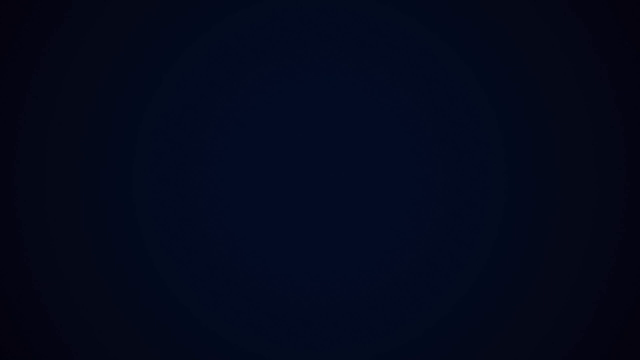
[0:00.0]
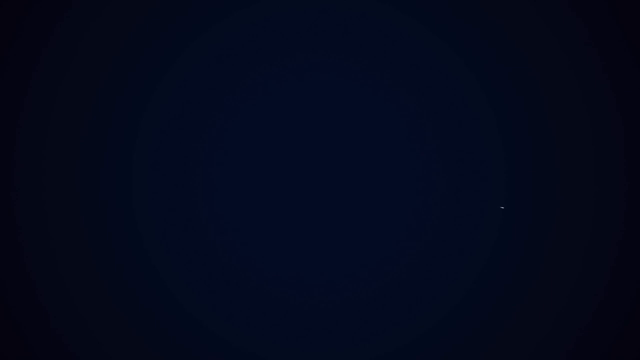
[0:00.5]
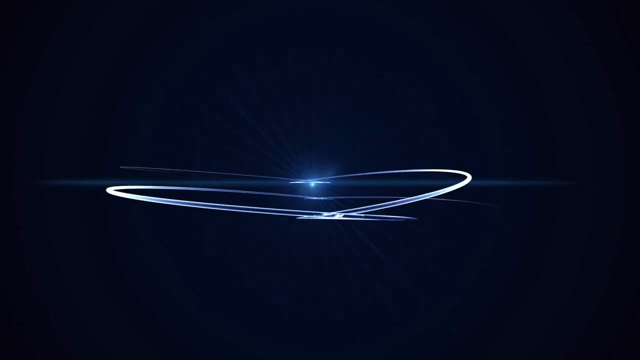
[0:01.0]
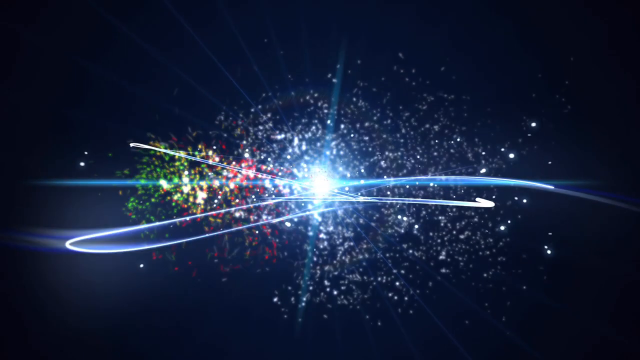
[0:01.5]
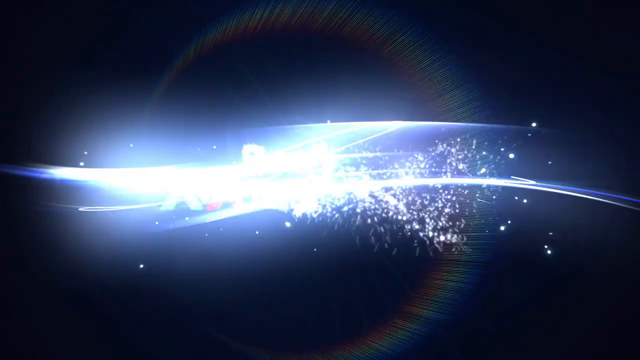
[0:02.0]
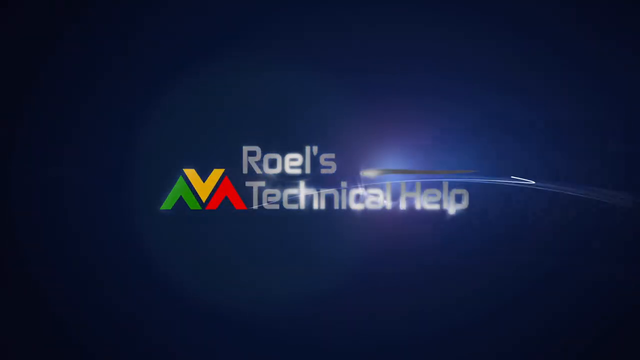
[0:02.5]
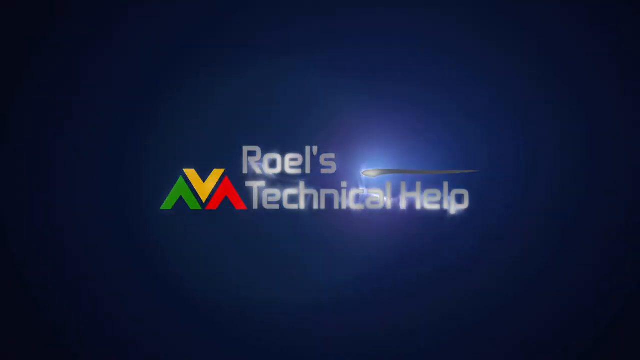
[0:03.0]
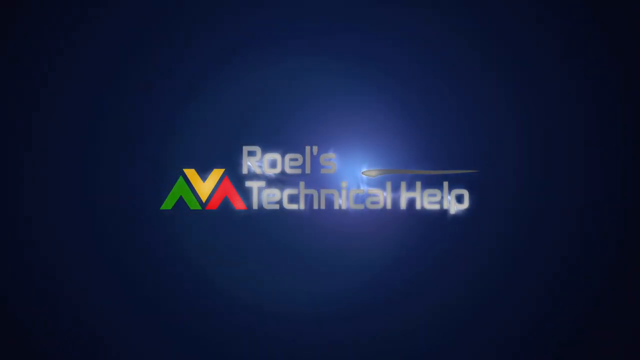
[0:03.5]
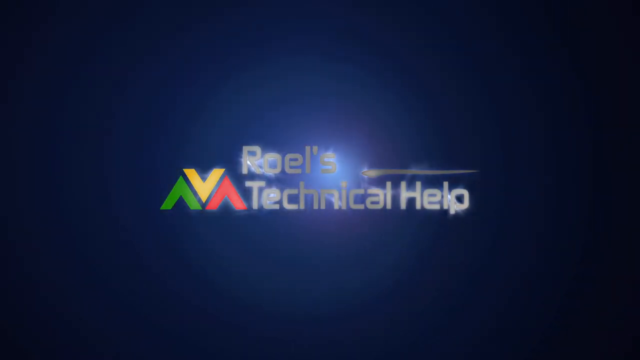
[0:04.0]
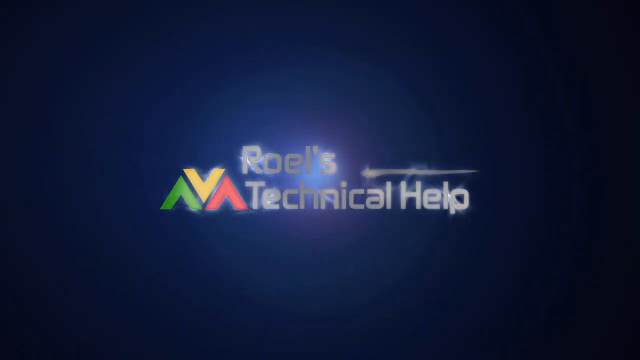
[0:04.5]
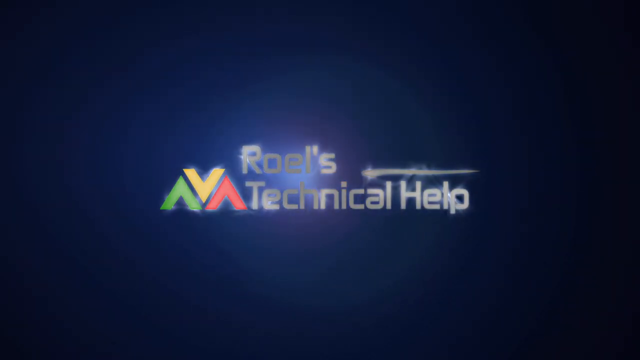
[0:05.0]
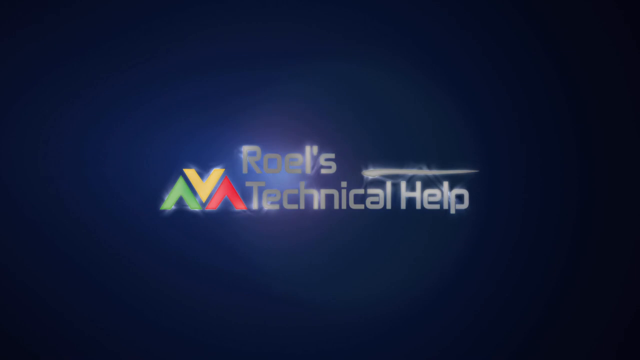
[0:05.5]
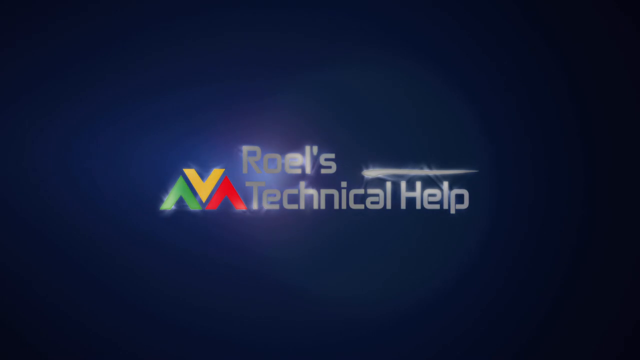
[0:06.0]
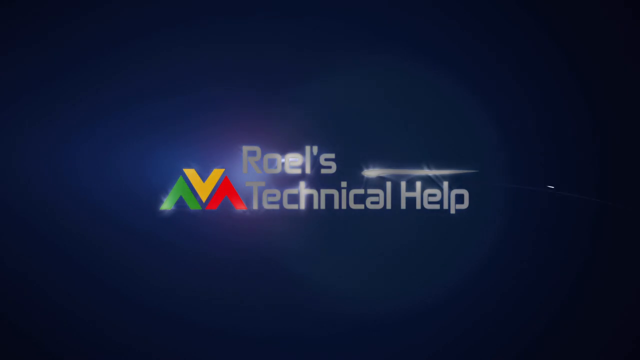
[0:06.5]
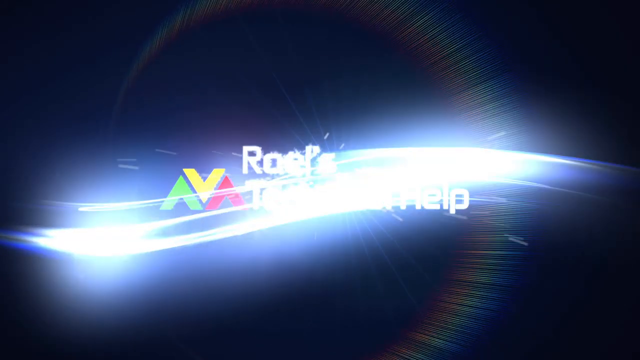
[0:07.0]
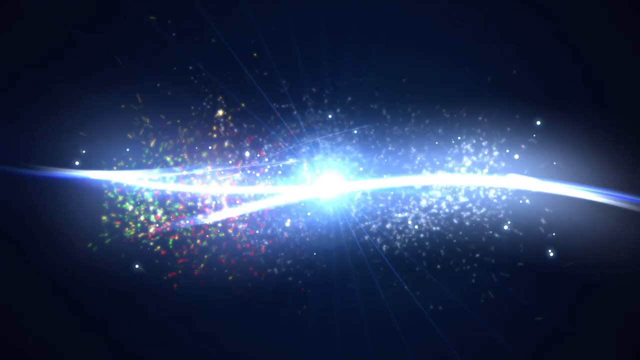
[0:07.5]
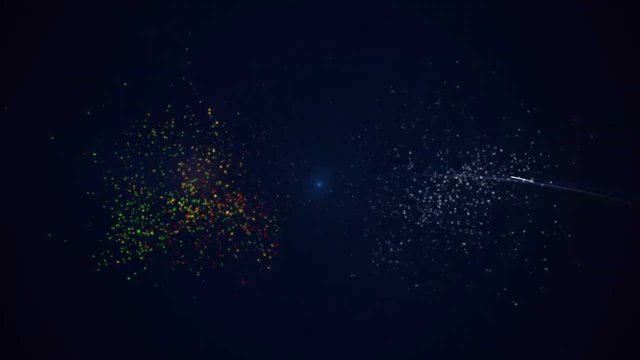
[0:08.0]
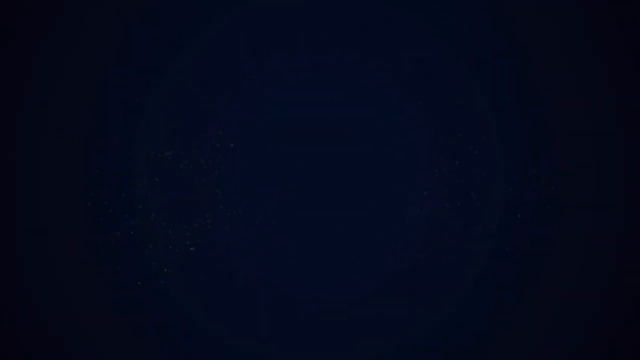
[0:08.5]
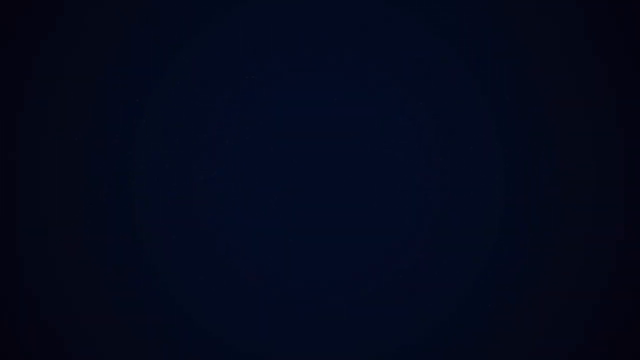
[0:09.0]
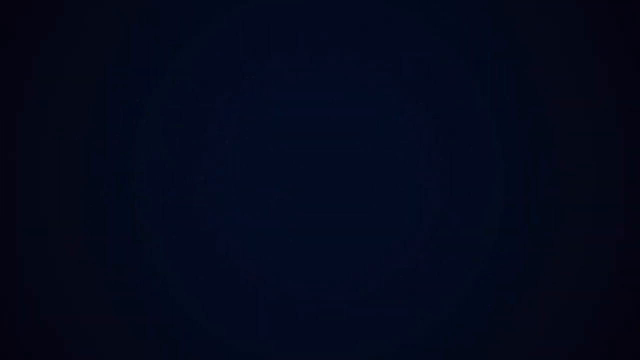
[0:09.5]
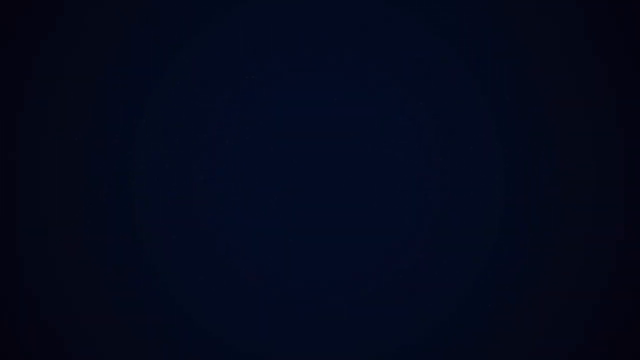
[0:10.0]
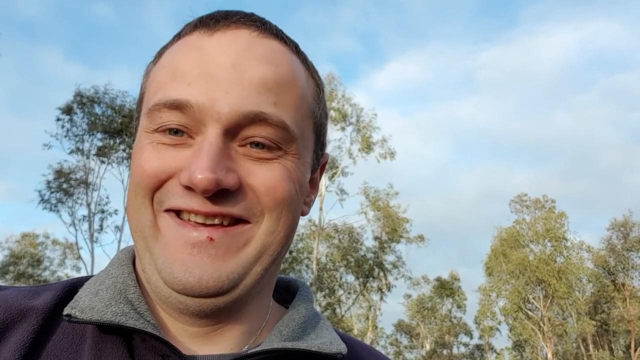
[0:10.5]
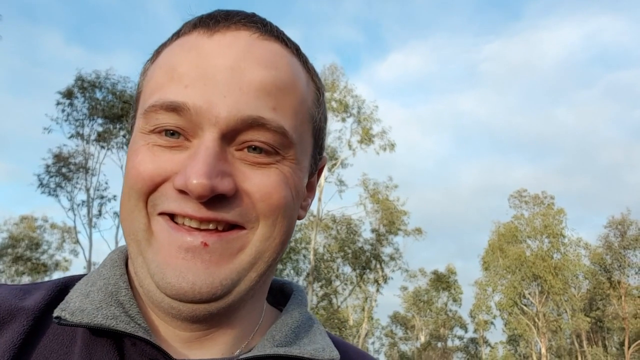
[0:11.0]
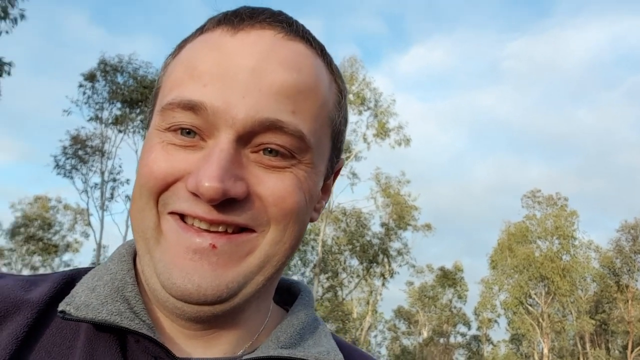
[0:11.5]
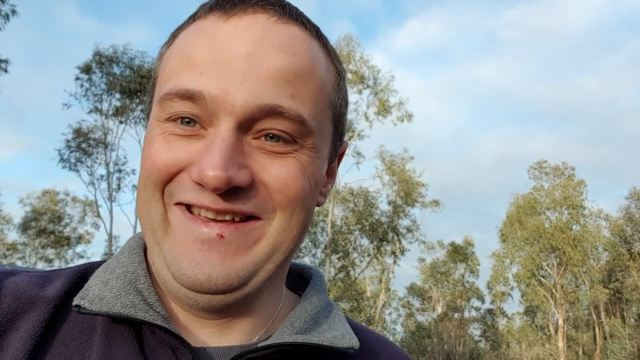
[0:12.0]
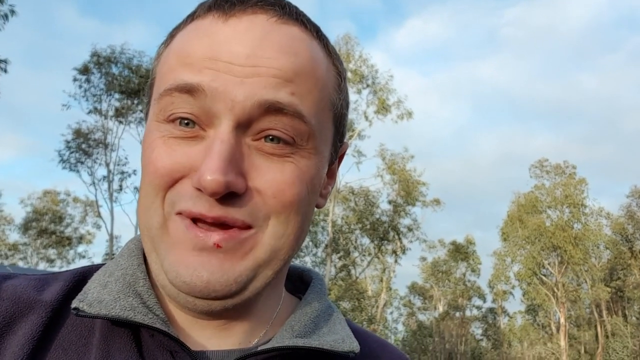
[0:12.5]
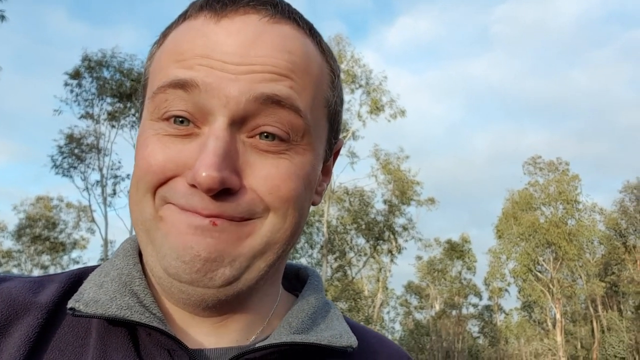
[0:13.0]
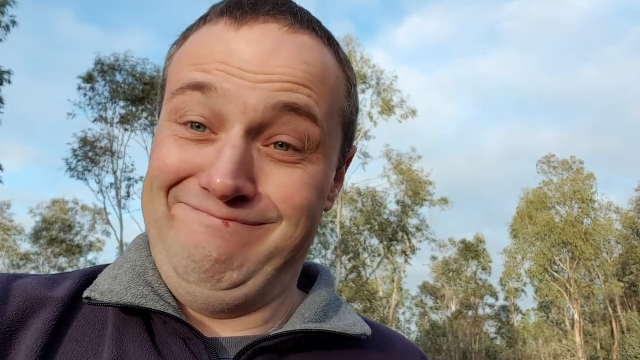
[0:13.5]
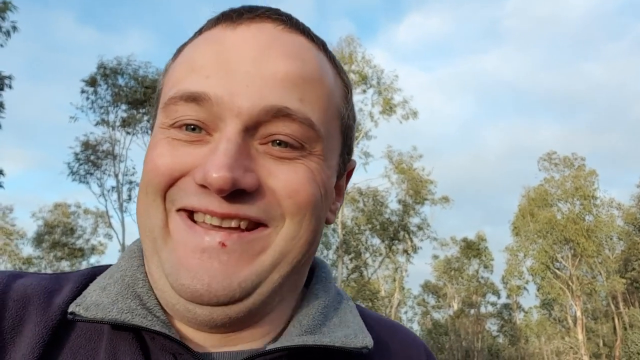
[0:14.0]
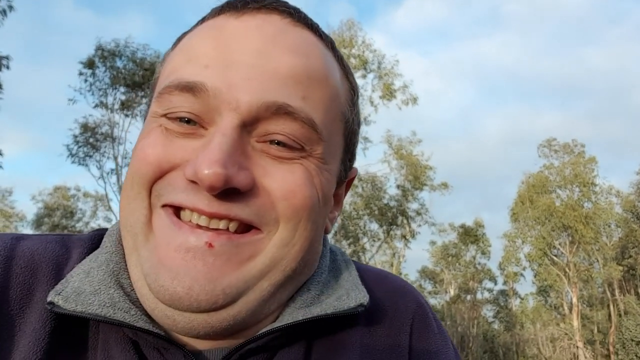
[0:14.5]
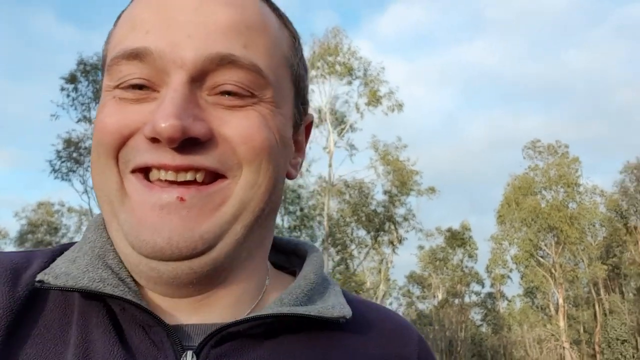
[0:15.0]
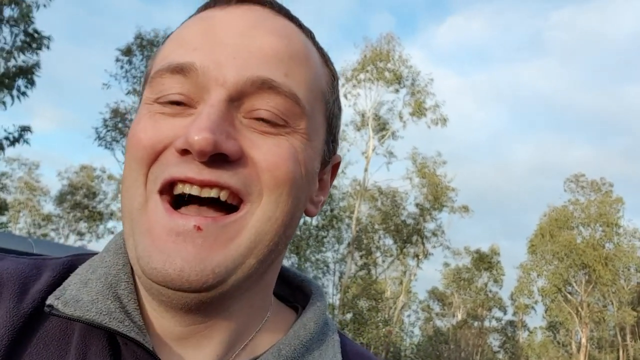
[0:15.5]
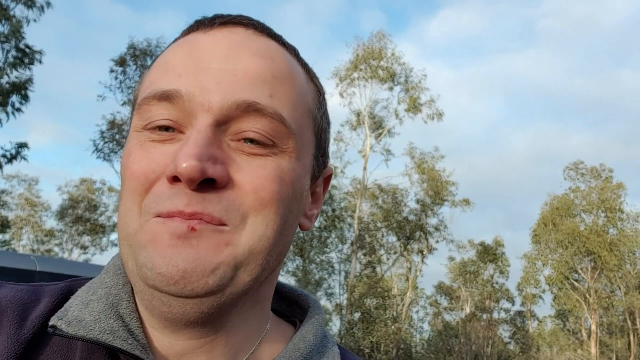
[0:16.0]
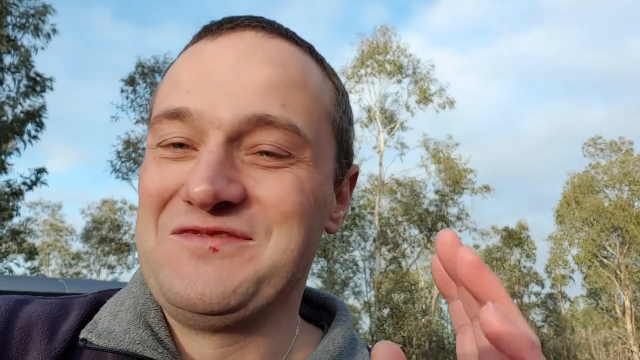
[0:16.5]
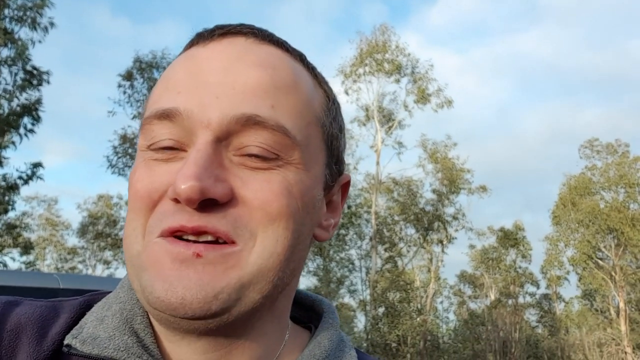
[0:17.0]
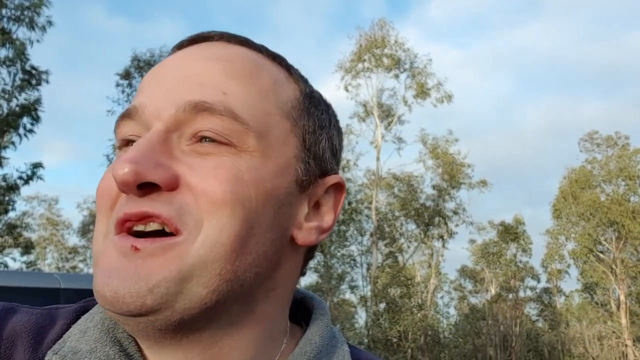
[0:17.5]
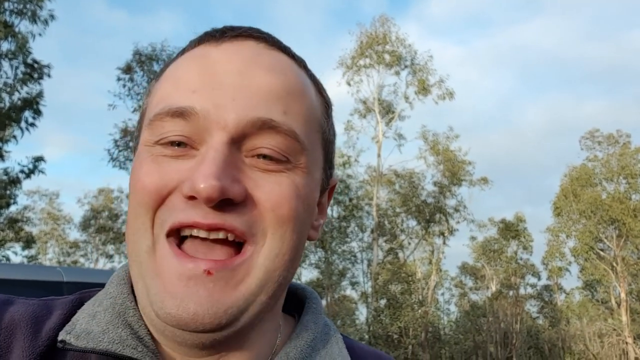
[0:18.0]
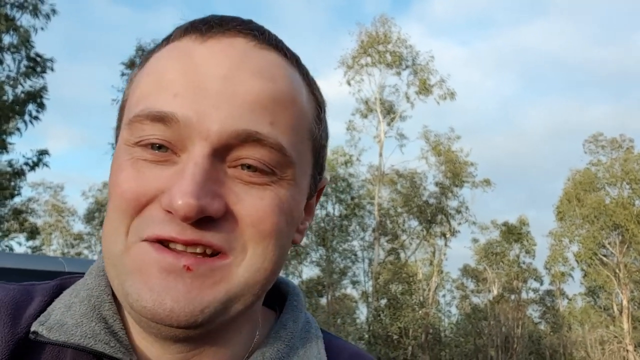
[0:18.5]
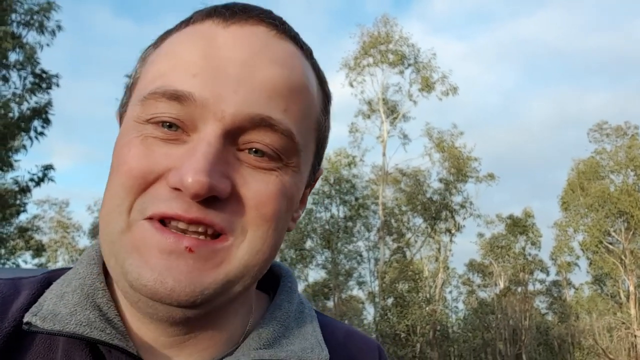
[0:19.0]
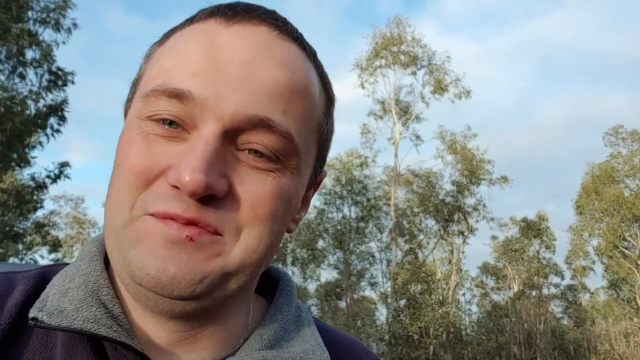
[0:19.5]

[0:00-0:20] A CGI star wipe with some lens flare plays, and at the end of the wipe a logo appears reading "Roel's technical help." Beside the text is a green inverted V, next to it a normal yellow capital V, and after that a red inverted V, so the shapes look almost like mountains in green, yellow and red. A slight glow appears in the background, then another wipe crosses the frame with some particles. A man is standing in what looks like a field, probably in Australia; tall trees that appear to be eucalyptus are in the background. He is a Caucasian man with short hair and a thin upper lip who looks Australian, and he has a small sore or cut on the outer part of his lower lip. He seems to be mugging for the camera a little, making faces, shrugging his shoulders and smiling. It is a fairly bright day, and the trees are very tall. He wears what looks like a zipped-up pullover with a kind of flared collar; the main body appears purplish or dark gray and the fleece collar is a lighter gray.